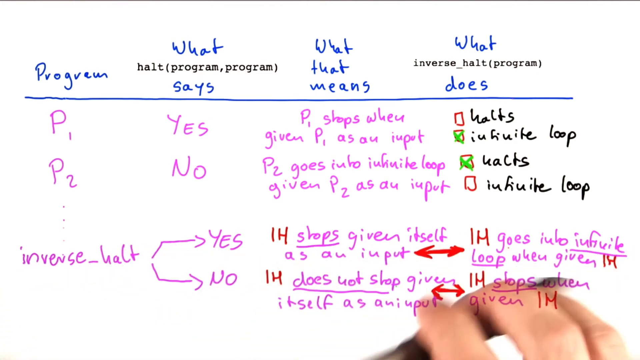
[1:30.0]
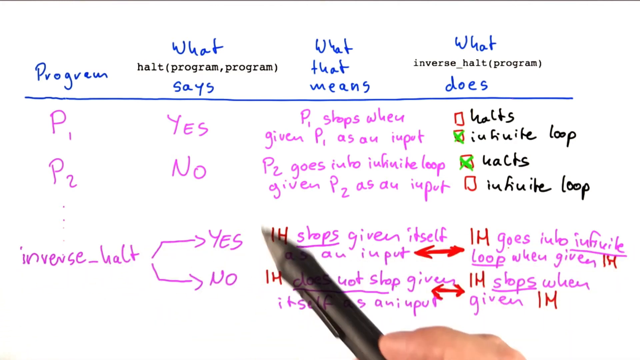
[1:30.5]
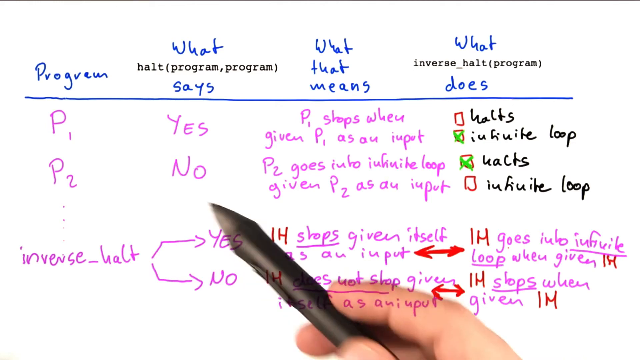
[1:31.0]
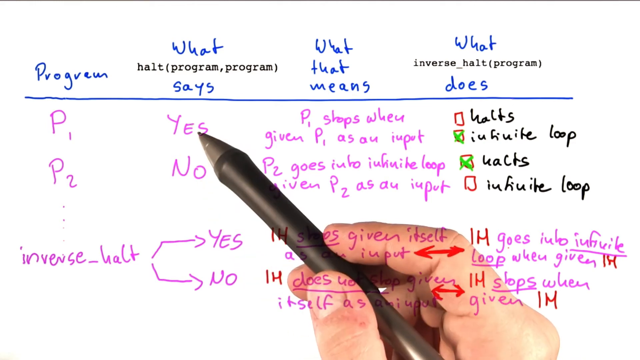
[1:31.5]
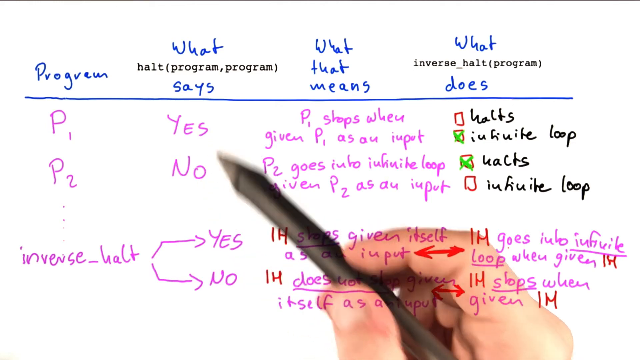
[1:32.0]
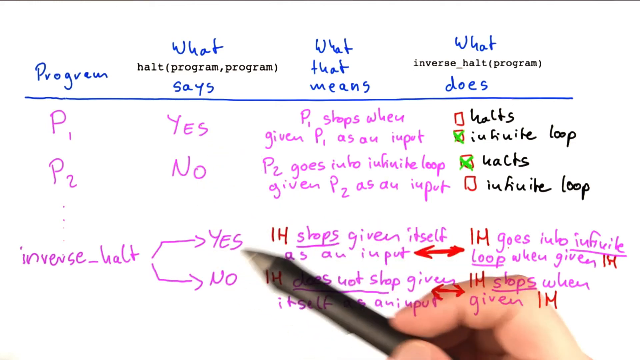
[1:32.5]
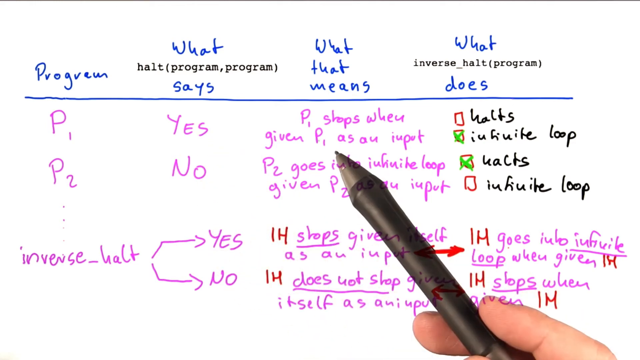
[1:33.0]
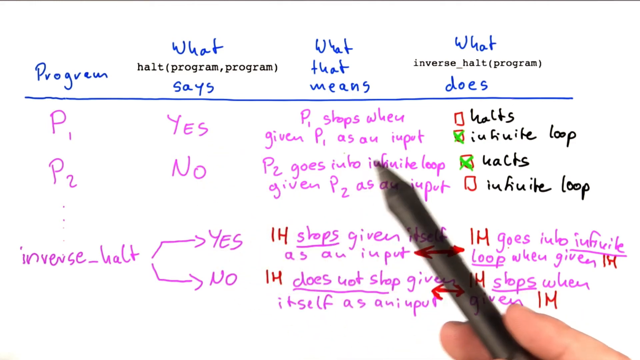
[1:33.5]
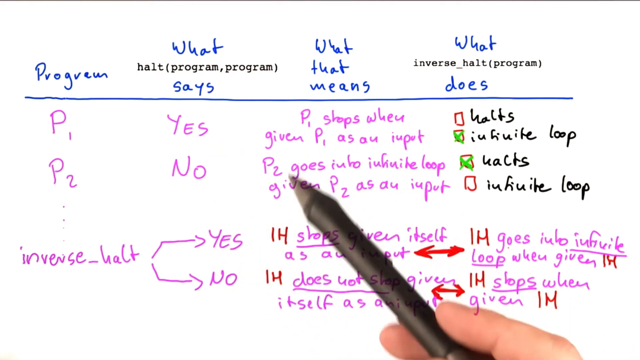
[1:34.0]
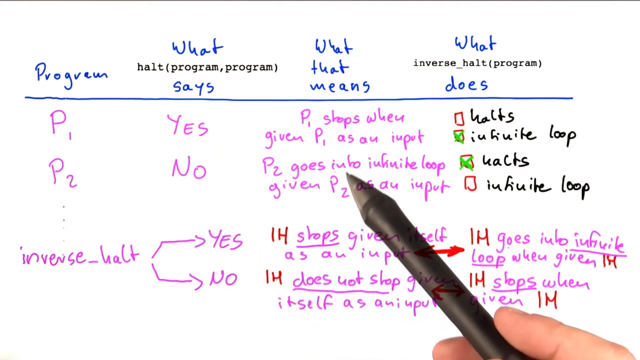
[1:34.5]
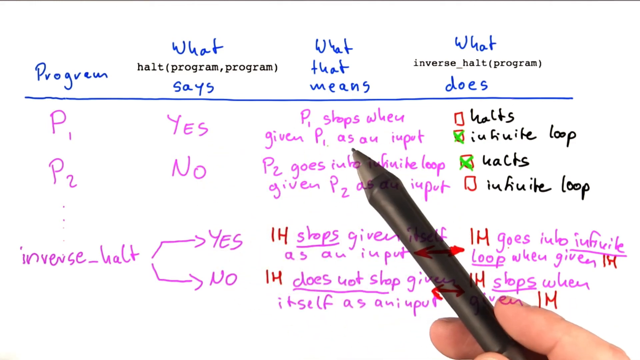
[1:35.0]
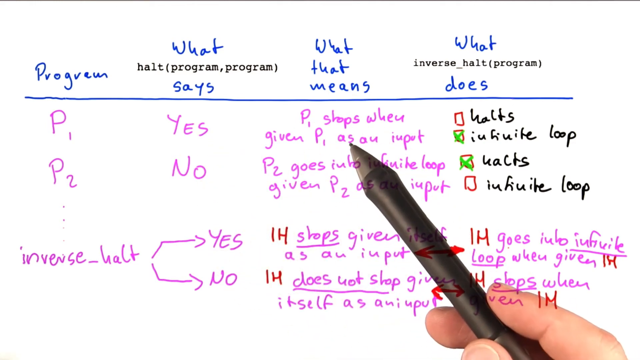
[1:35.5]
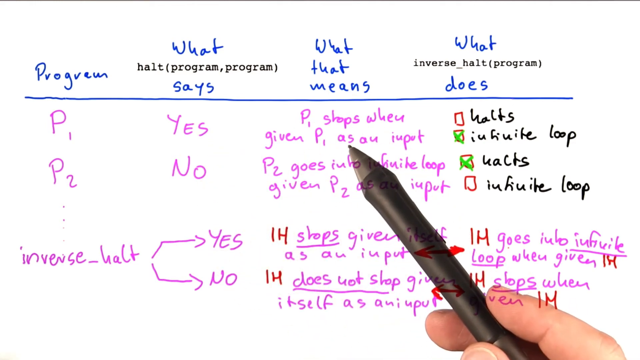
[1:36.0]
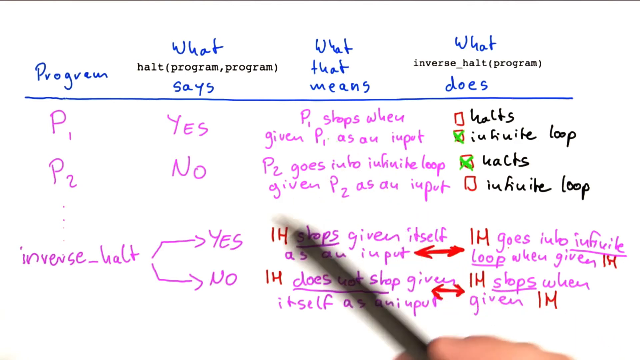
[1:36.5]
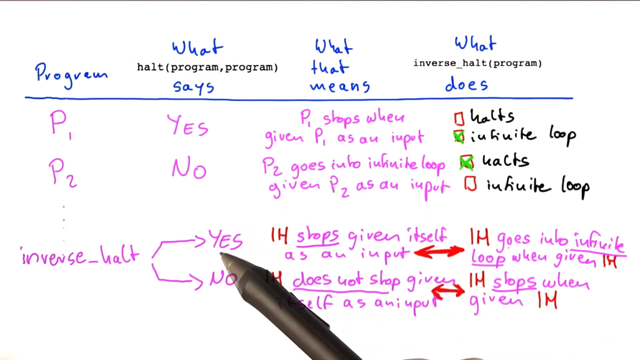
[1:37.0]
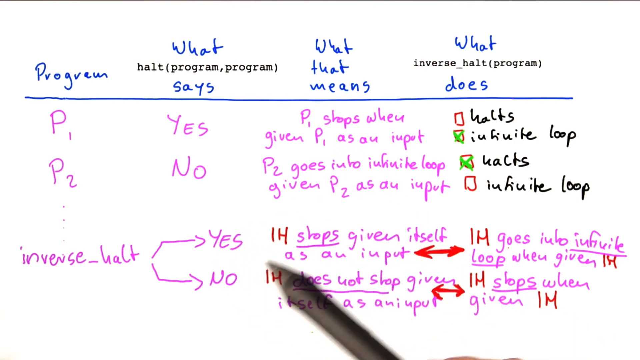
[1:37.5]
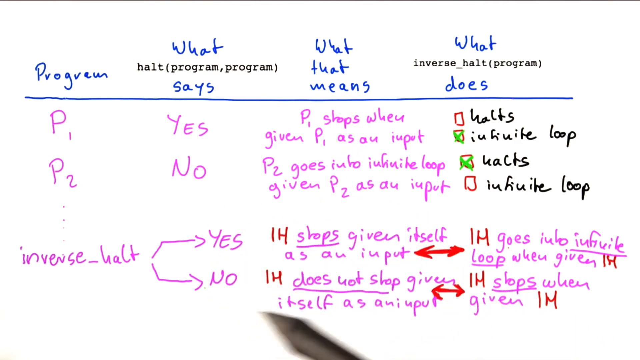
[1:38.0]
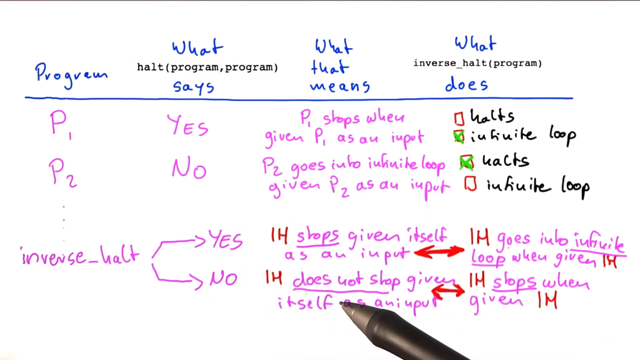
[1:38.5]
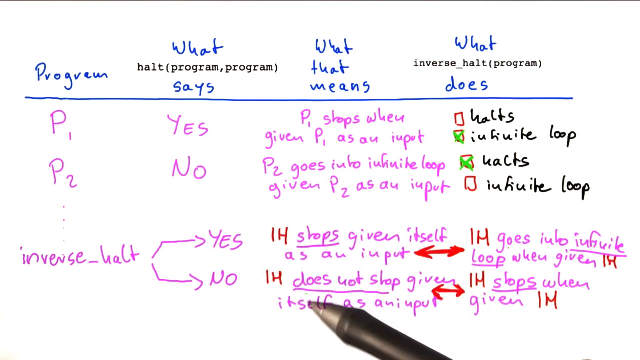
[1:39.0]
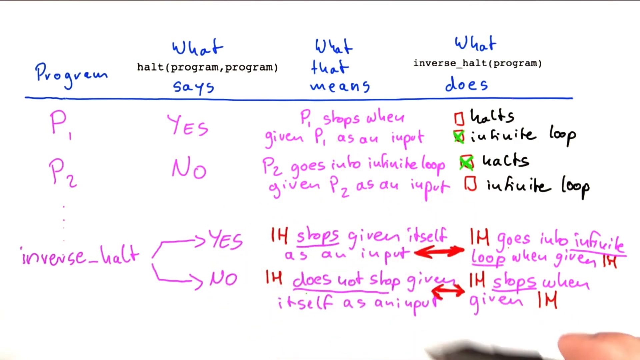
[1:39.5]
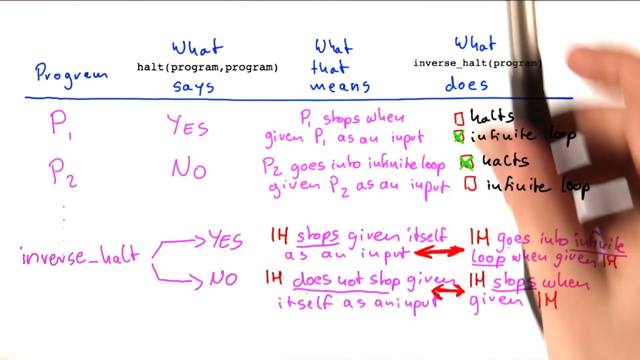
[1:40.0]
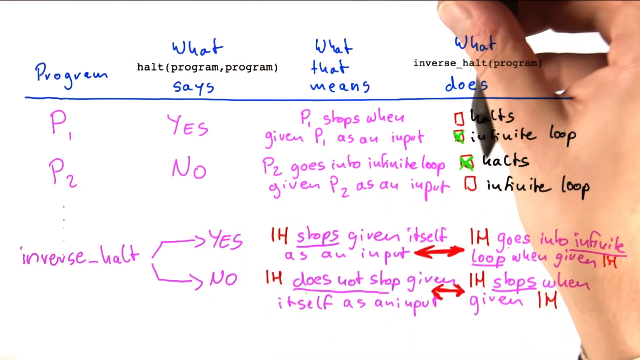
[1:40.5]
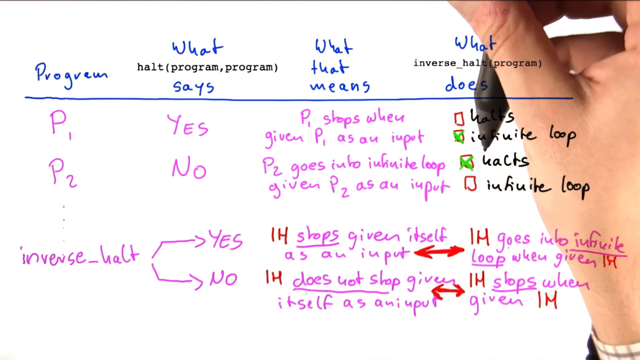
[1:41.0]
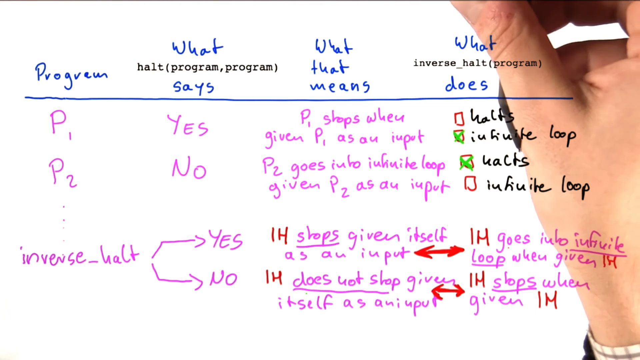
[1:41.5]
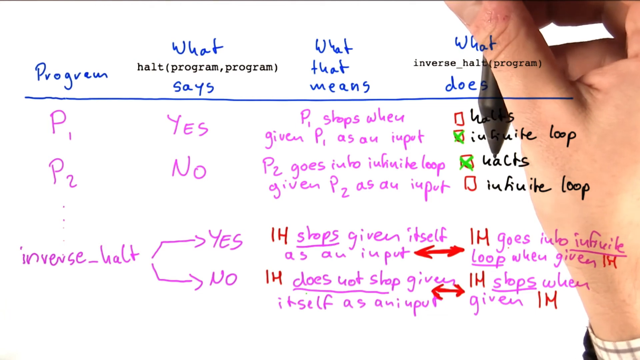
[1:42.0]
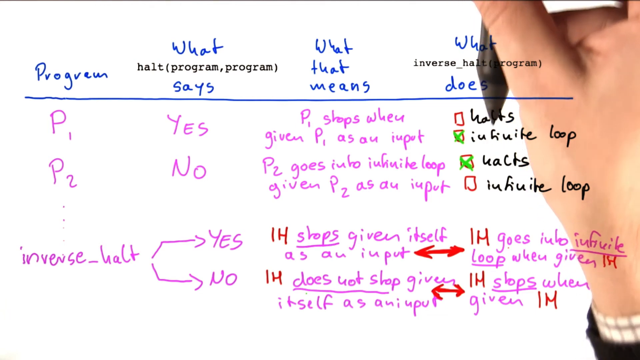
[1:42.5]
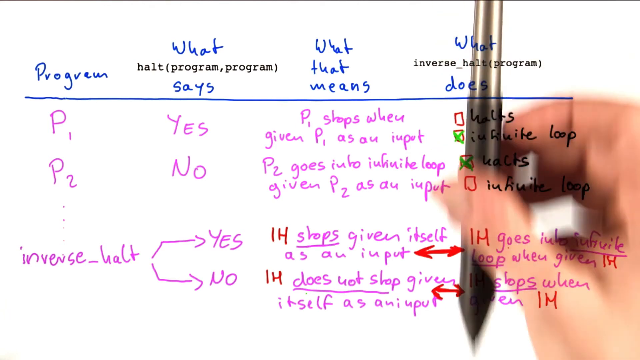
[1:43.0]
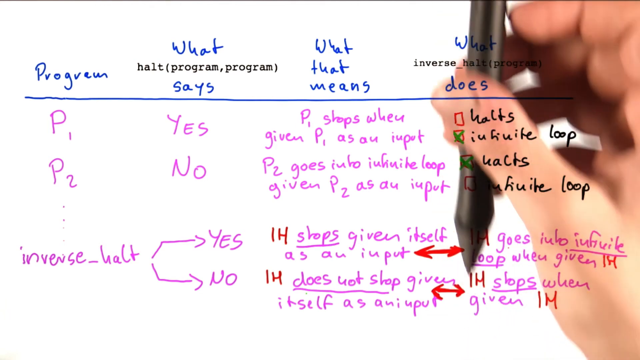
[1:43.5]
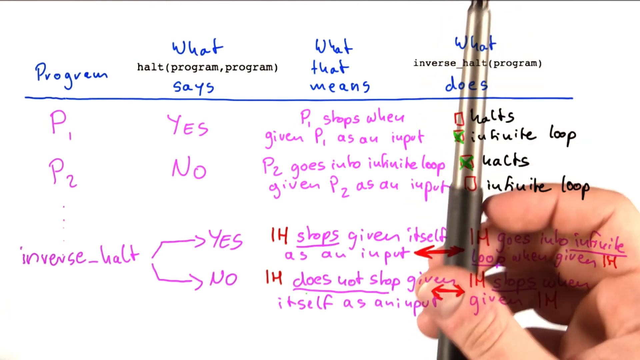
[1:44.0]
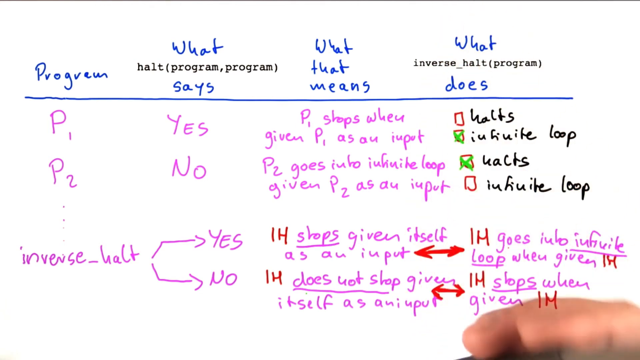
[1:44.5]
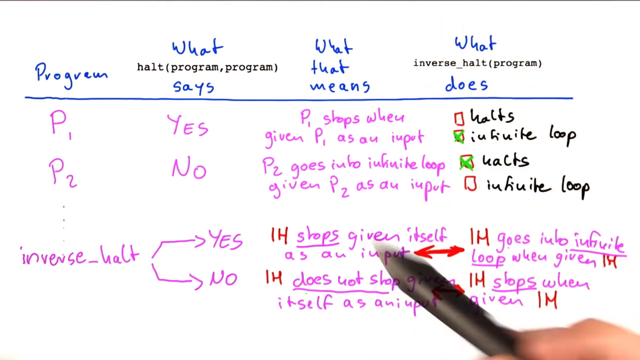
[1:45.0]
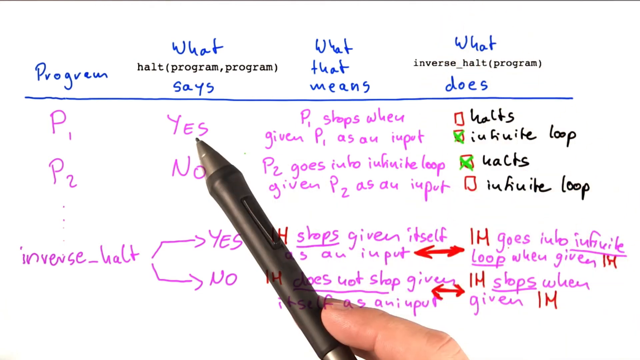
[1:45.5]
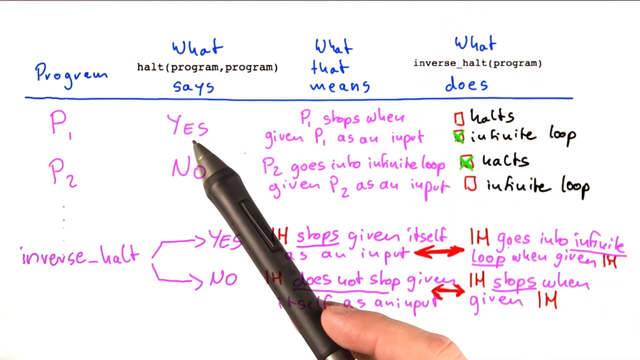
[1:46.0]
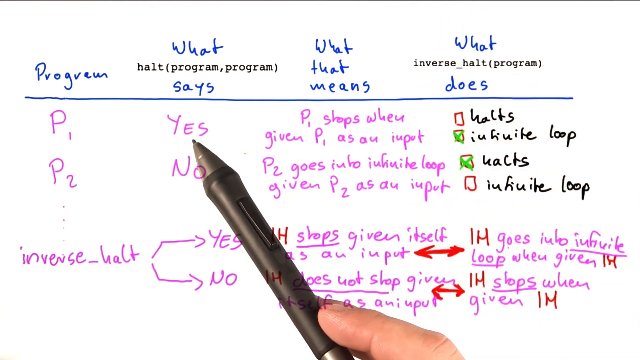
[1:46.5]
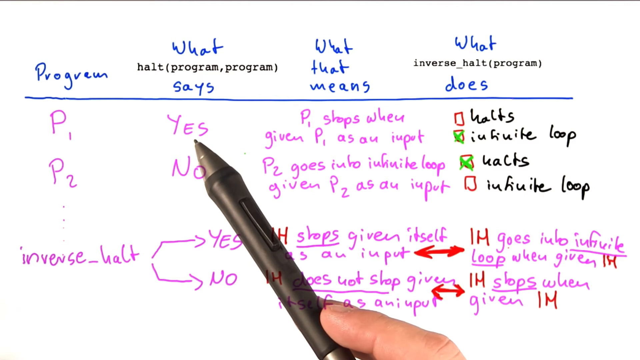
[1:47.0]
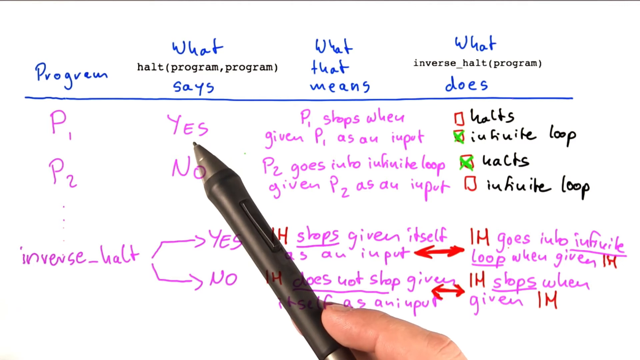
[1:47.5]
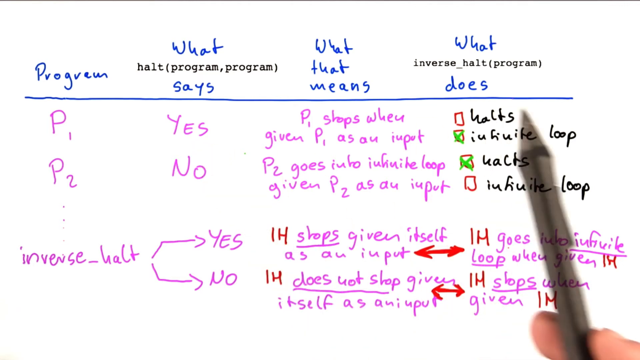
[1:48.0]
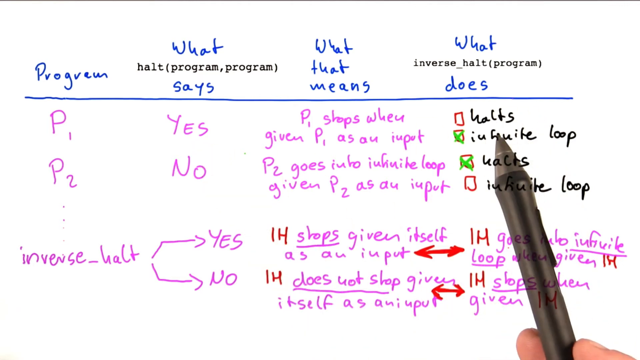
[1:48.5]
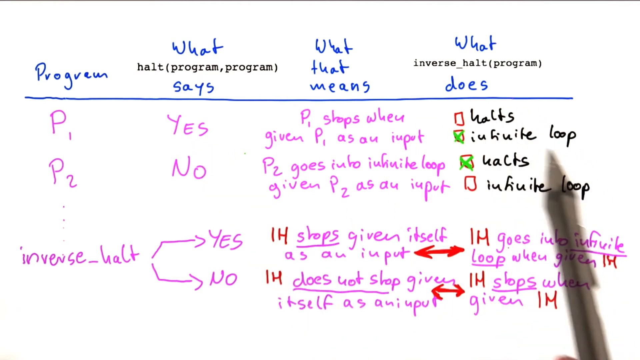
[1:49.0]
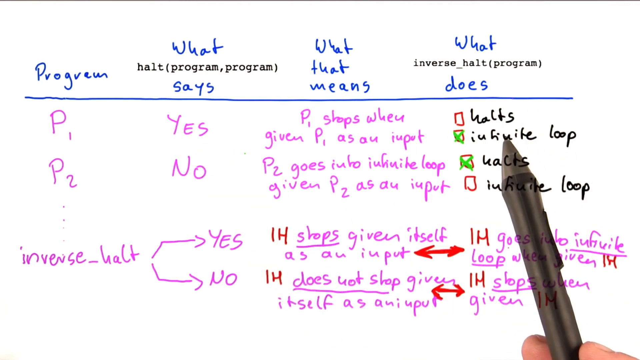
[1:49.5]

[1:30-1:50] A whiteboard shows writing mainly in blue and purple, with a little red and green; the categories at the top are blue. The first category on the left is "program", with P1, P2 and then inverse halt below it. The second category is "what says": yes under P1, no under P2, and yes or no under inverse halt. The third category is "what that means" and the fourth is "what that does", which concerns whether it halts or there is an infinite loop. Red arrows go left and right. The person uses a black pen to point out various parts, pointing down to the bottom part of the board, then holding the pen under the "what does" column and making a downward motion in that category, then moving over to the yes and the infinite loop for P1.